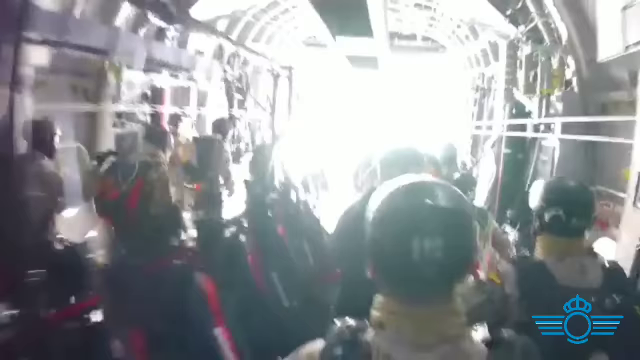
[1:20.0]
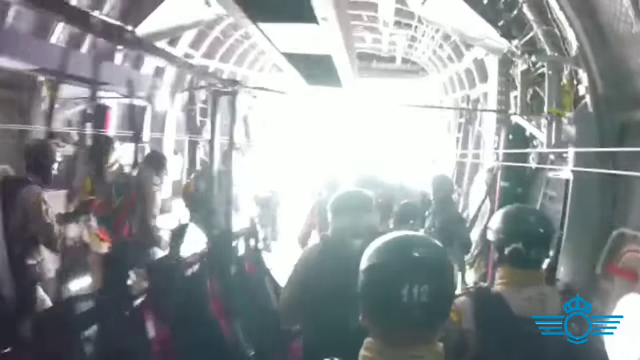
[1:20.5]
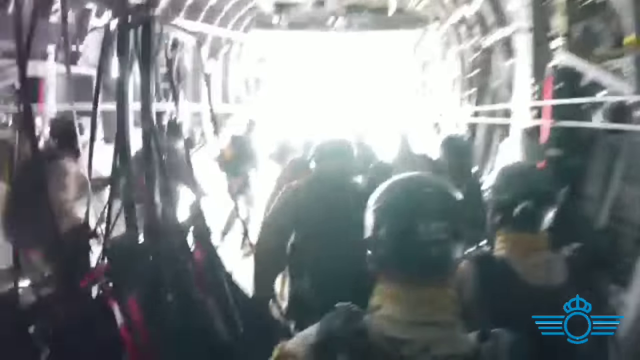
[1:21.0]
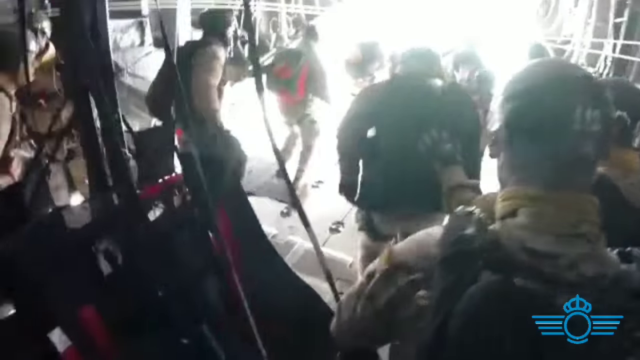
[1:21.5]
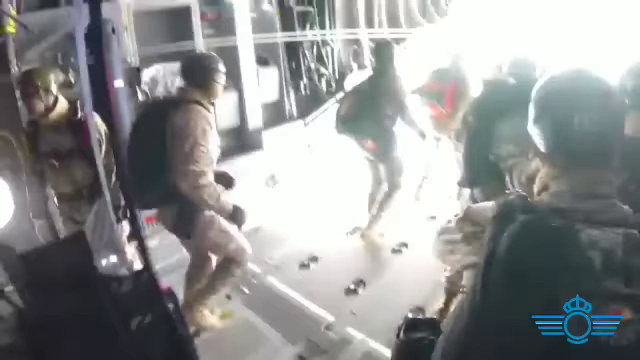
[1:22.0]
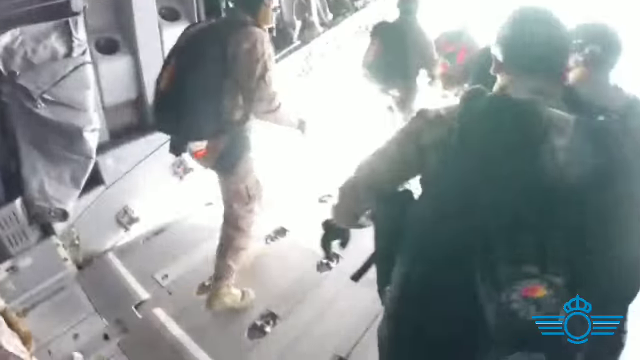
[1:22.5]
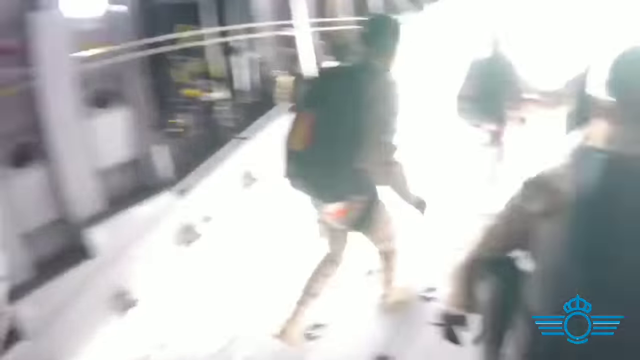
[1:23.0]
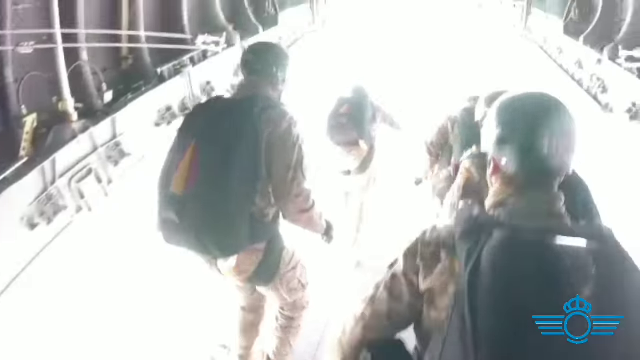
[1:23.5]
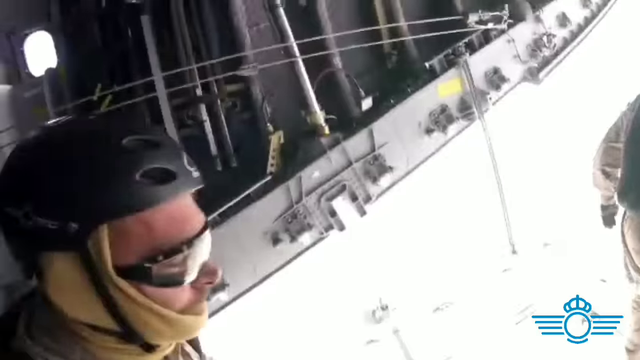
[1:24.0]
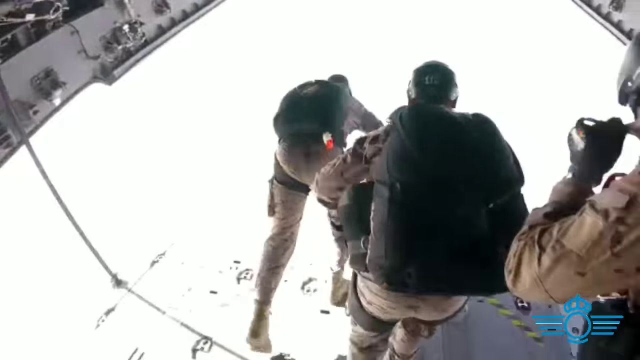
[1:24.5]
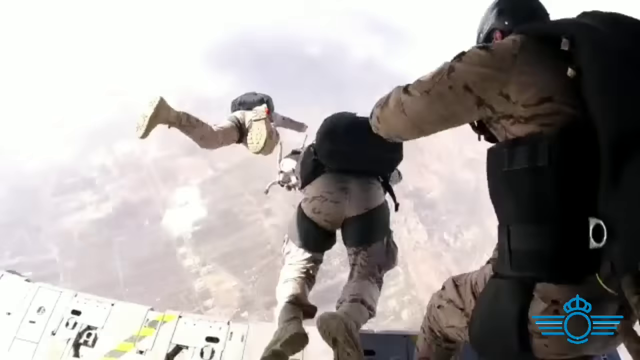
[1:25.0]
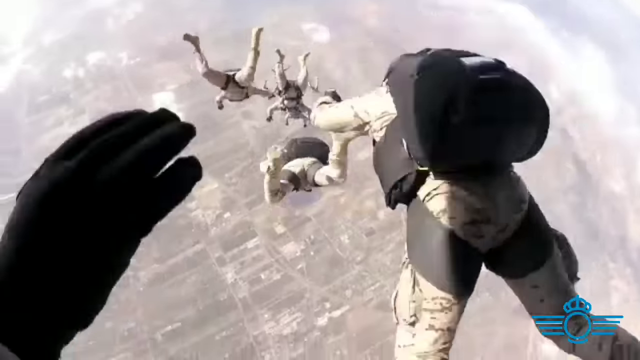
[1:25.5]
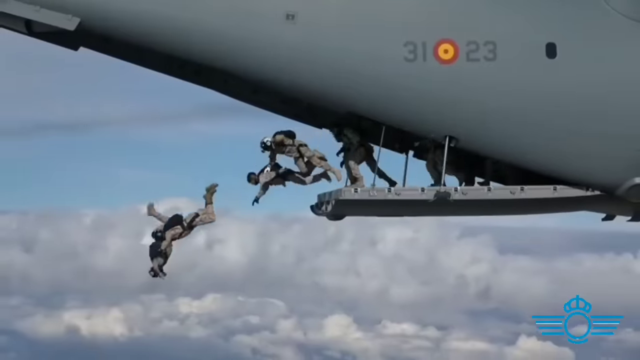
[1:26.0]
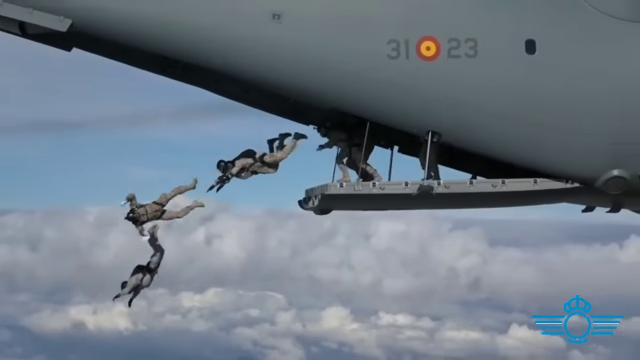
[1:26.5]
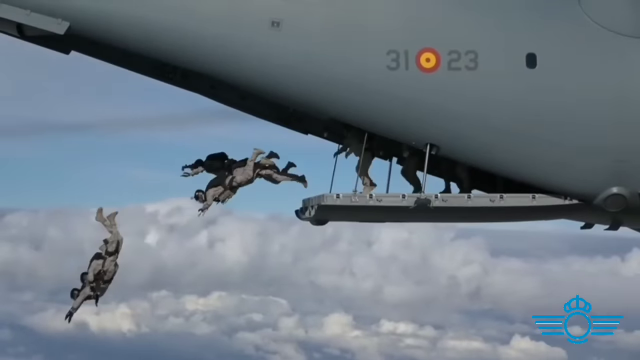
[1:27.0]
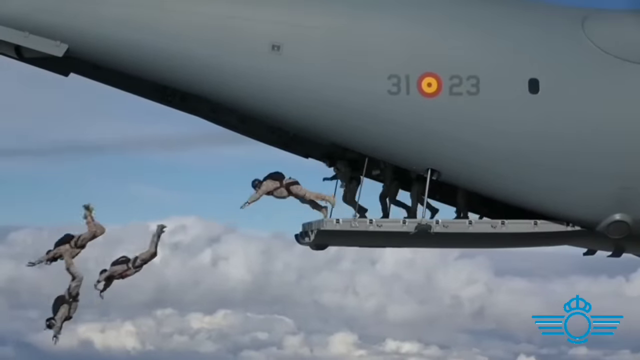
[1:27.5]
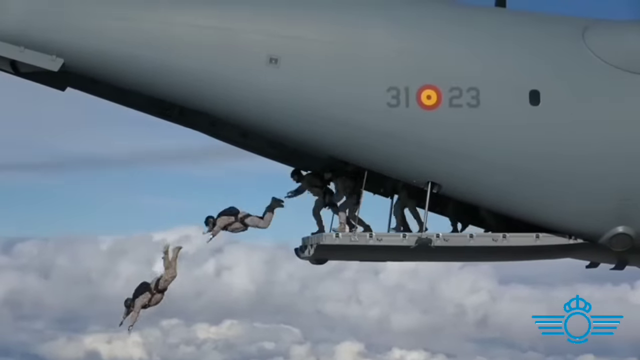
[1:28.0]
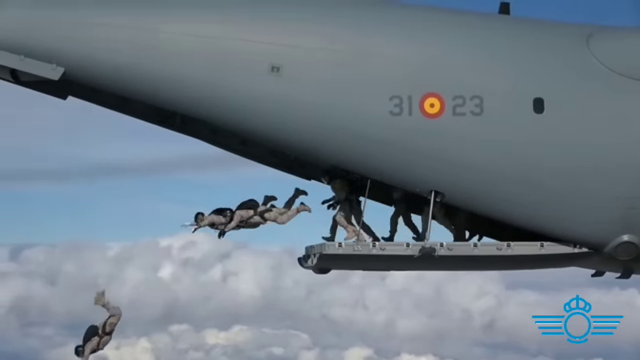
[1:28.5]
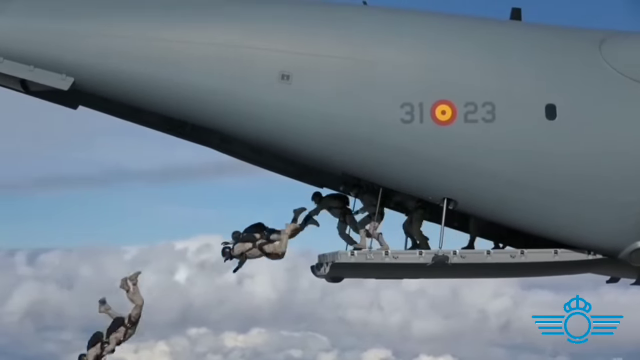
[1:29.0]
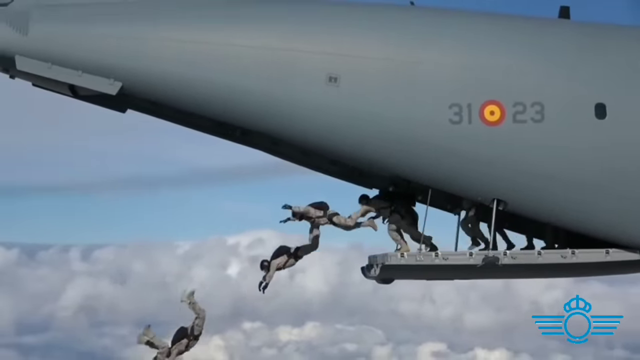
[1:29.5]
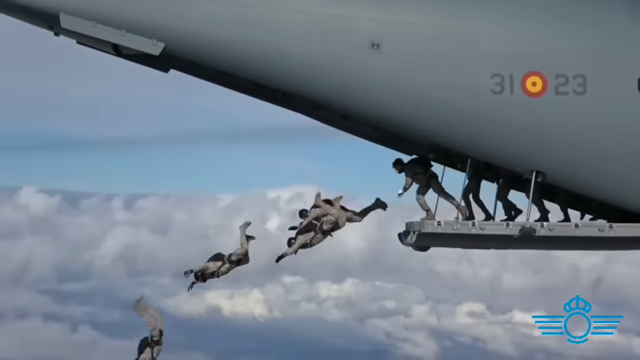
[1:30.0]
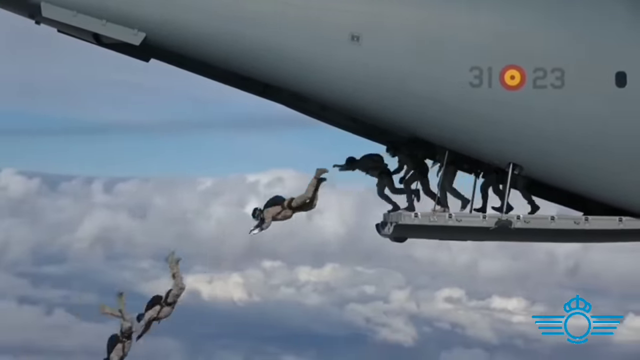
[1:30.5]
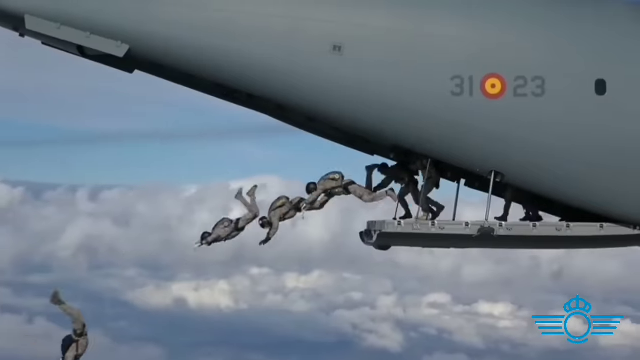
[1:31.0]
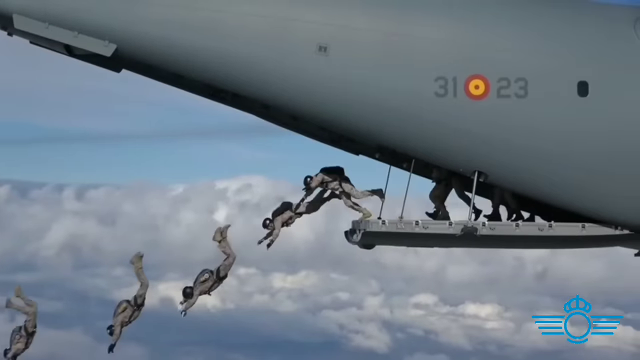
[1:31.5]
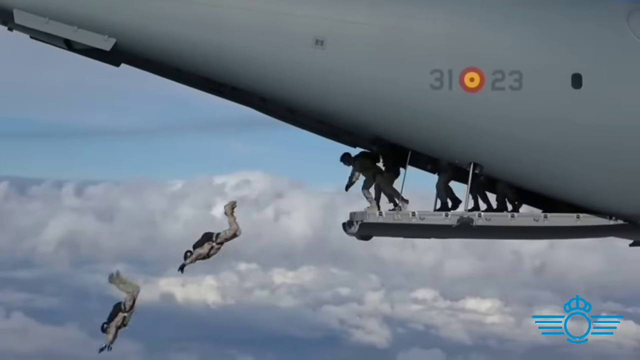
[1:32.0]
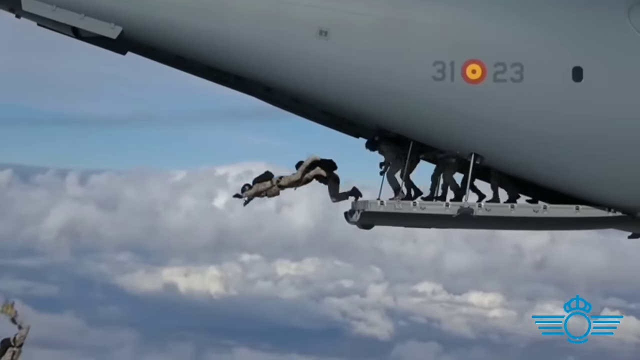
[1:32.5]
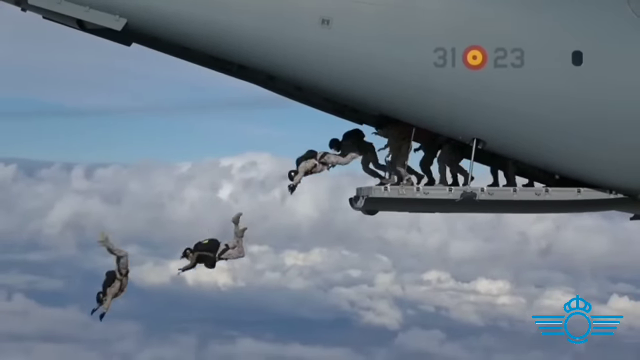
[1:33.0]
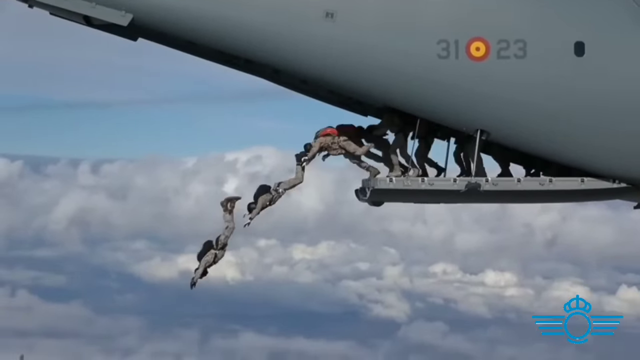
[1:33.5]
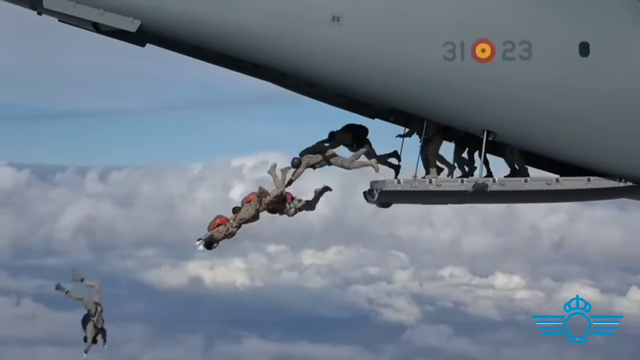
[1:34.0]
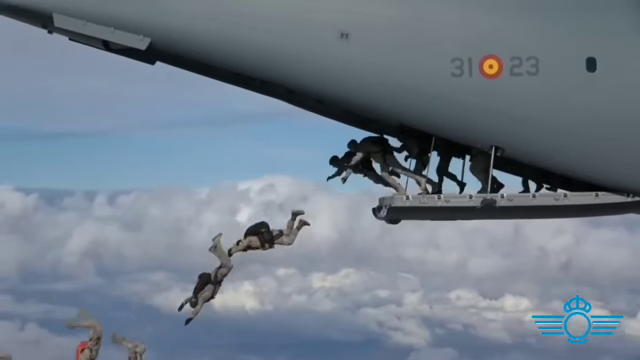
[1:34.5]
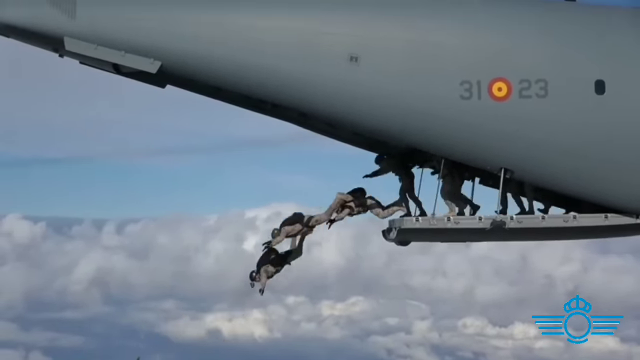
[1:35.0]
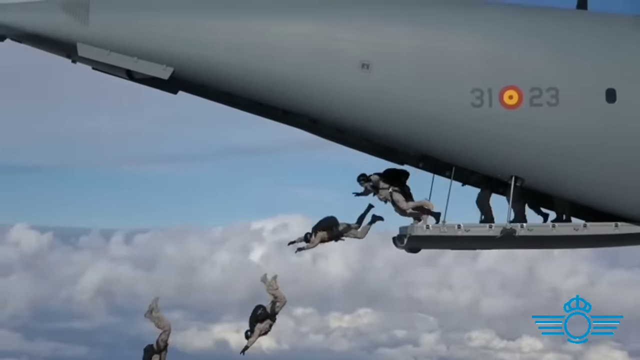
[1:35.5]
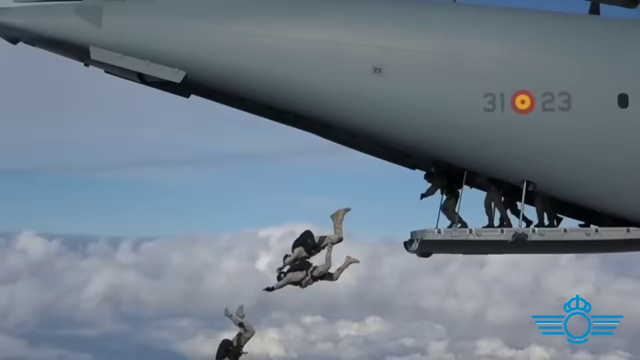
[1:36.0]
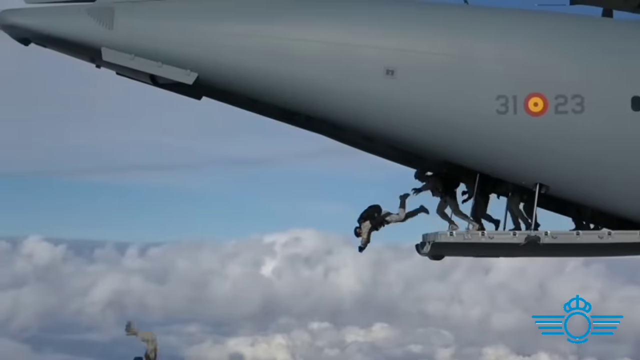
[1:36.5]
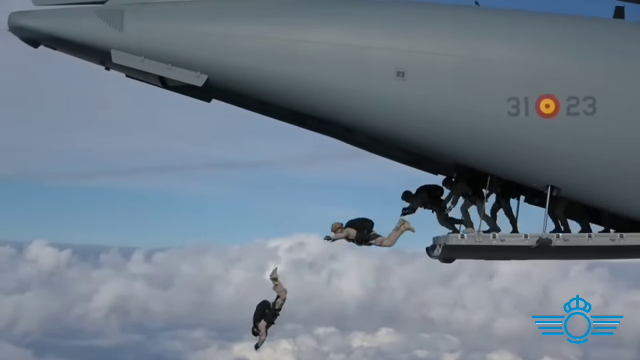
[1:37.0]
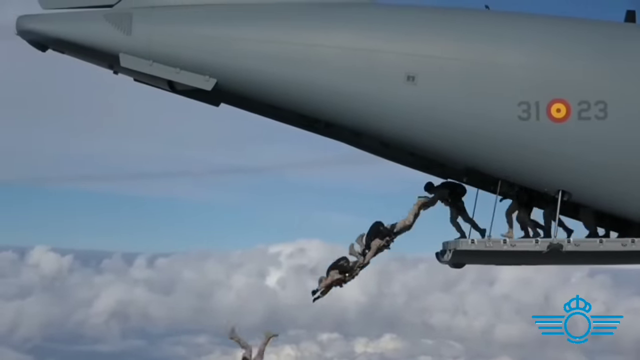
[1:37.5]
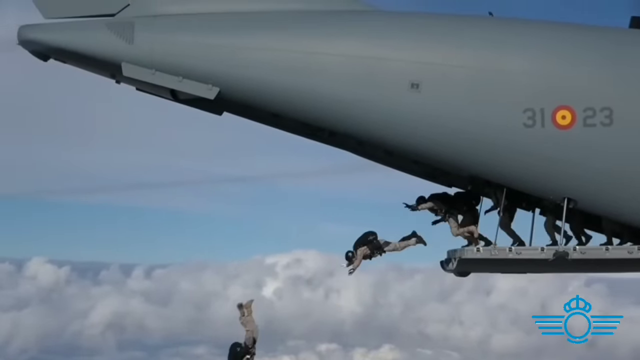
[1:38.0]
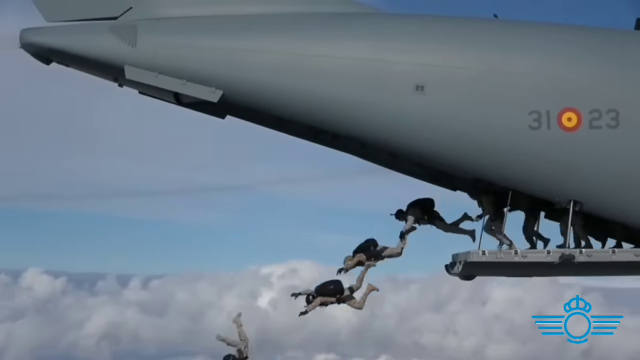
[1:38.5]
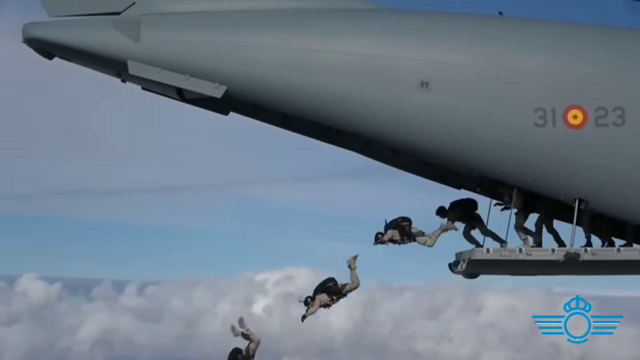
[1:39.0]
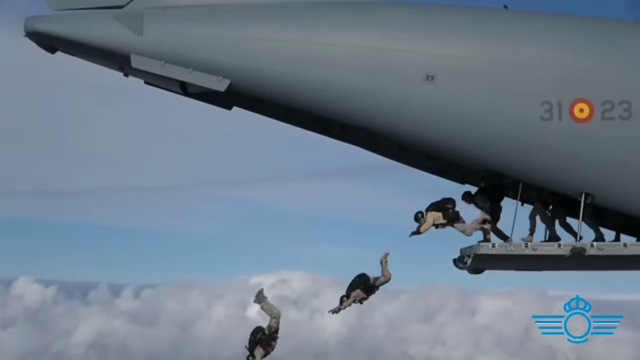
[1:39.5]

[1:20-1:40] The airmen are running, apparently inside a very large, spacious aircraft that looks all gray inside. The men run toward some light, then jump out of the aircraft wearing their protective gear. In the background are fluffy clouds and a clear sky. The outside of the aircraft is gray and bears the numbers 31 and 23, with a yellow and red logo in the middle of them. The airmen all wear protective helmets and have on their backpacks, presumably holding their parachutes, and they all jump out of the plane quickly.